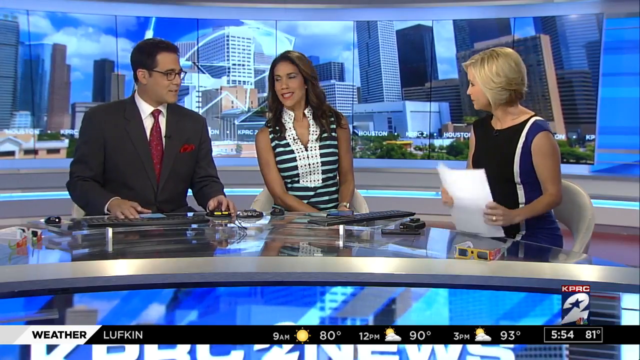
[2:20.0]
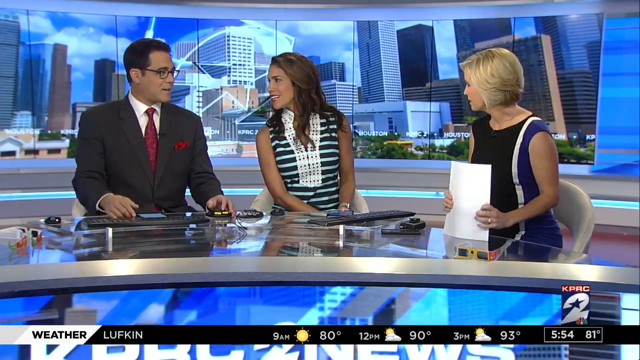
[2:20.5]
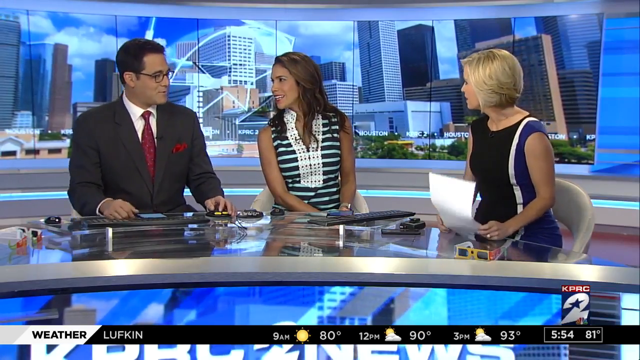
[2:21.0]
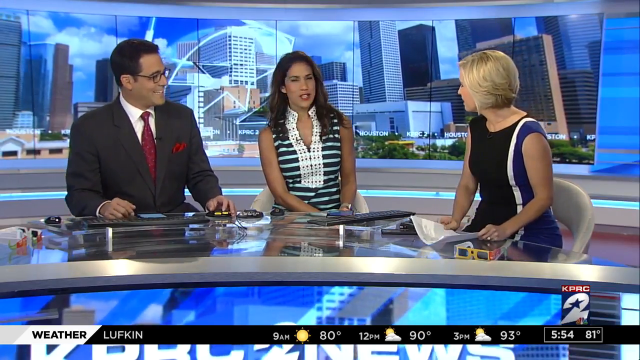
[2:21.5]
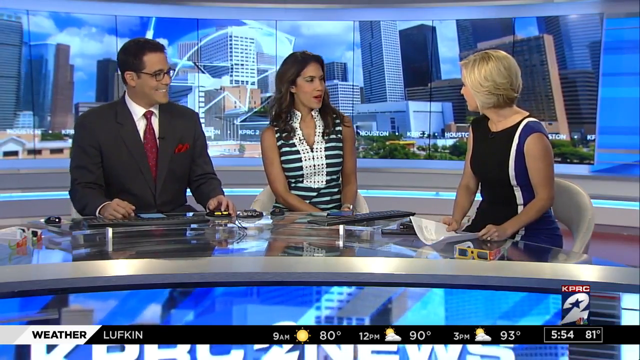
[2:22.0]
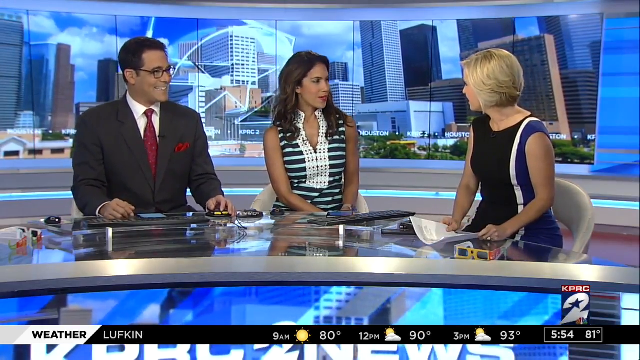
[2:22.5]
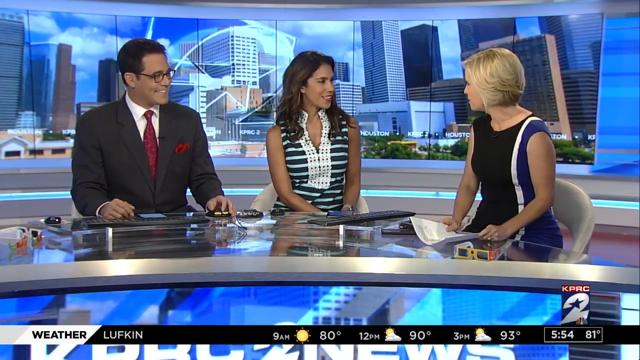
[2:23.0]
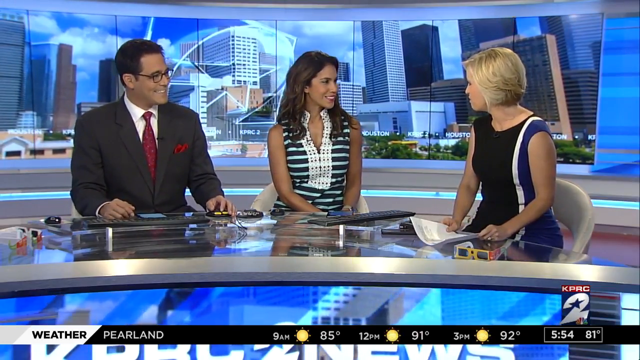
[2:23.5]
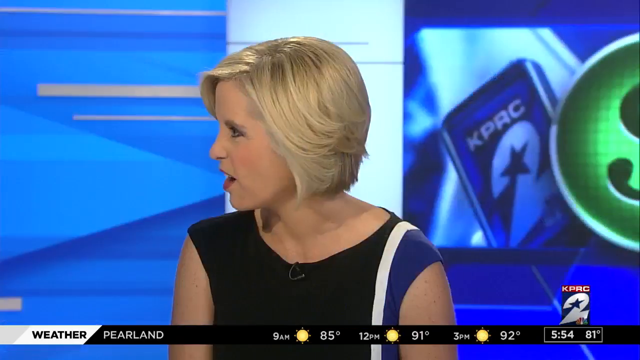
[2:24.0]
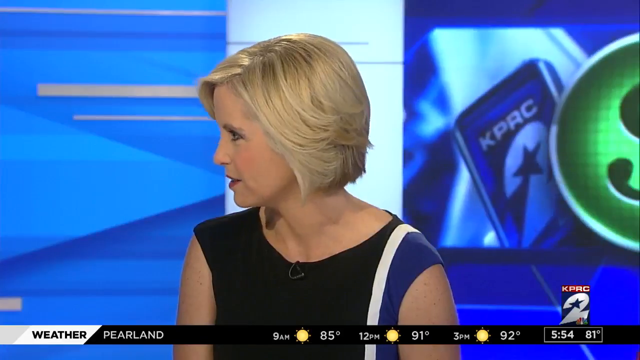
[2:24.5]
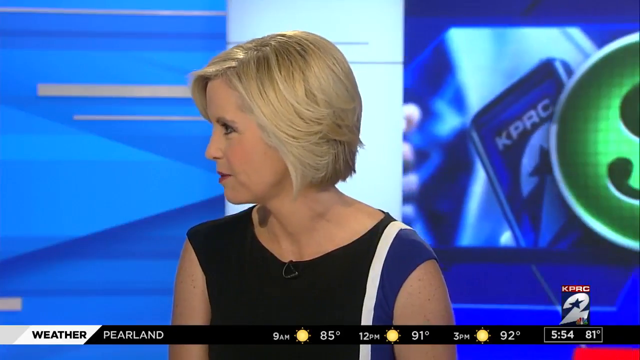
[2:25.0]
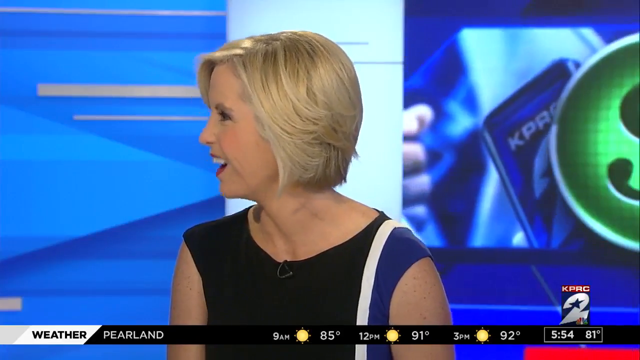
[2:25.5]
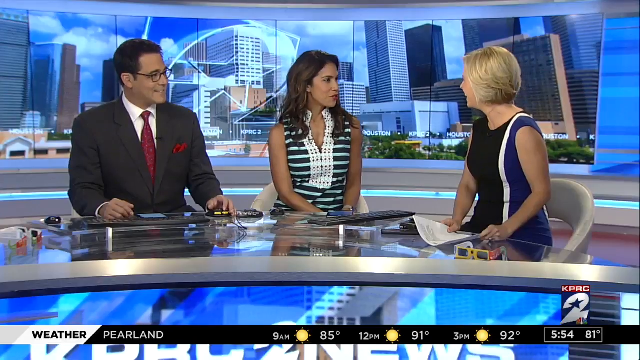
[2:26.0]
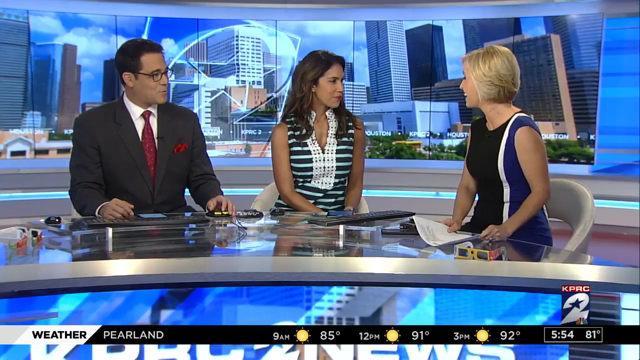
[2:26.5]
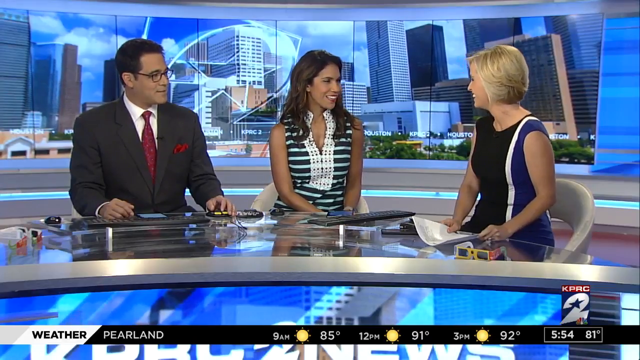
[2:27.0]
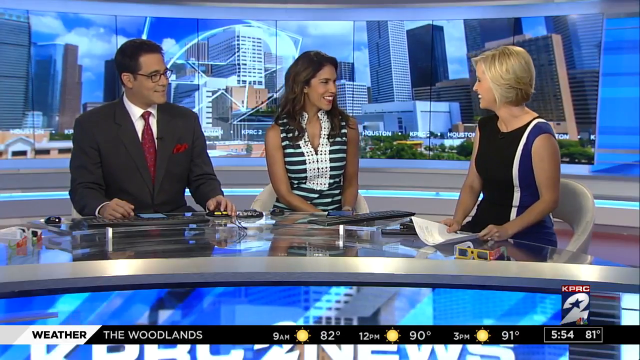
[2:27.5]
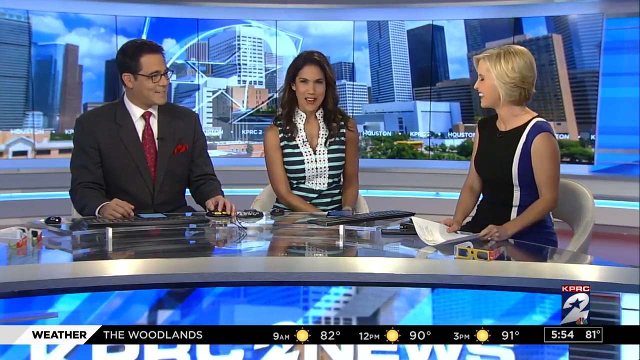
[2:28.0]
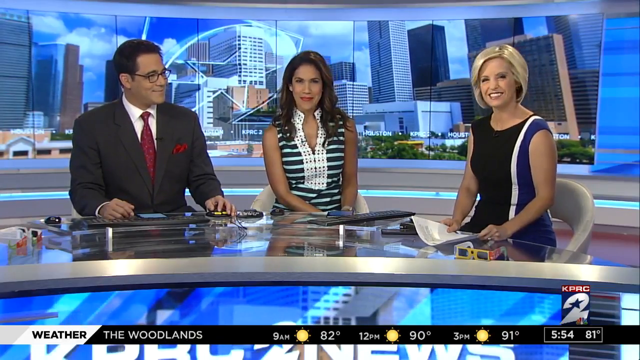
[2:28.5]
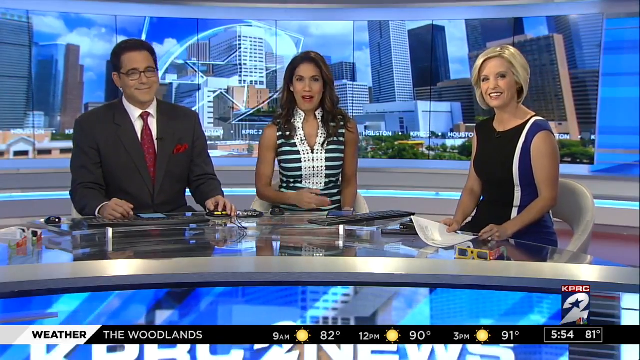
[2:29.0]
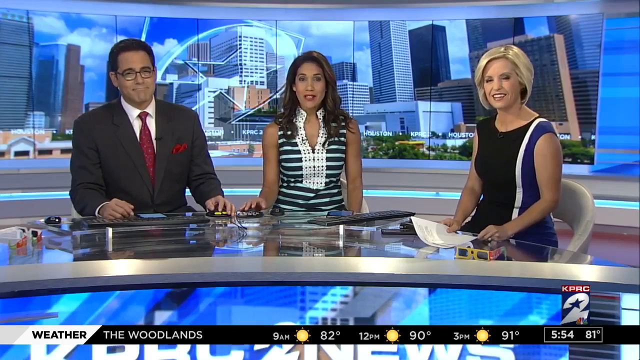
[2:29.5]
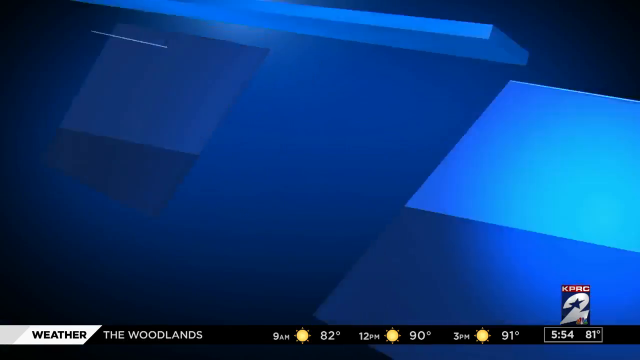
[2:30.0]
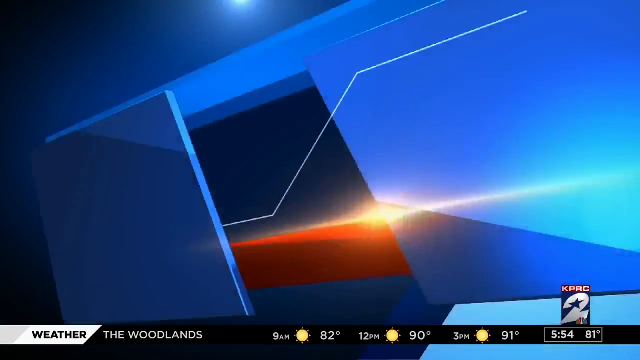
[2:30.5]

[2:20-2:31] Back in the studio are two ladies and a gentleman. The lady on the far left wears a black dress in two colours, black on one side and blue and white on the other; she has short blonde hair and holds white papers in front of her. The lady in the middle has long black hair and wears a black and white dress with designs in the middle. The gentleman is smiling; he wears glasses and has short hair, a black suit, a white shirt, a ribbon on his pocket and a maroon tie. They are reading the KPRC channel 2 news.